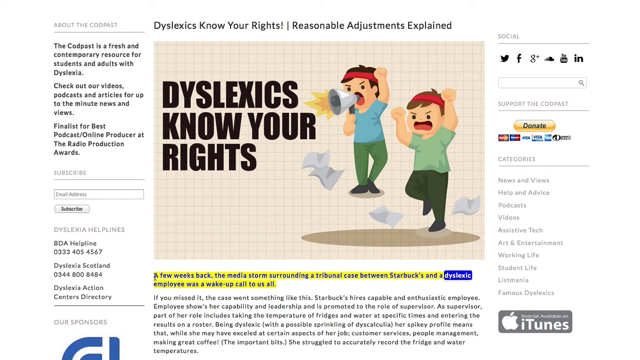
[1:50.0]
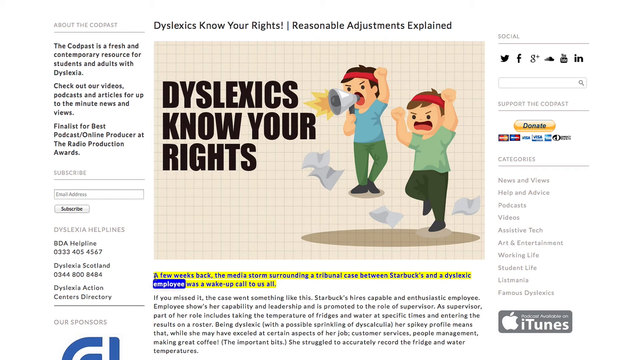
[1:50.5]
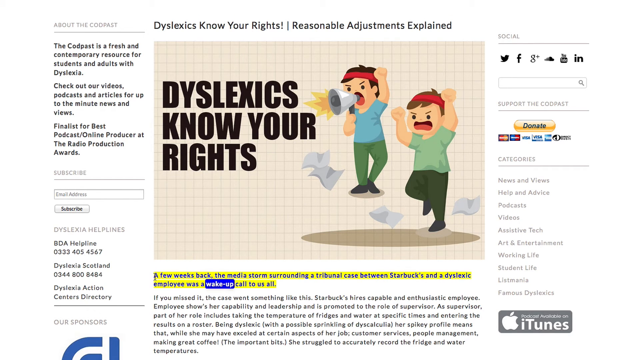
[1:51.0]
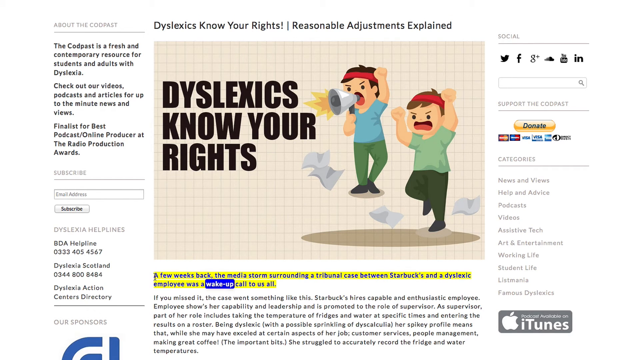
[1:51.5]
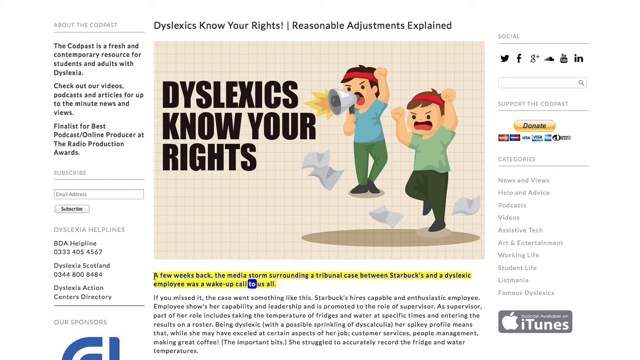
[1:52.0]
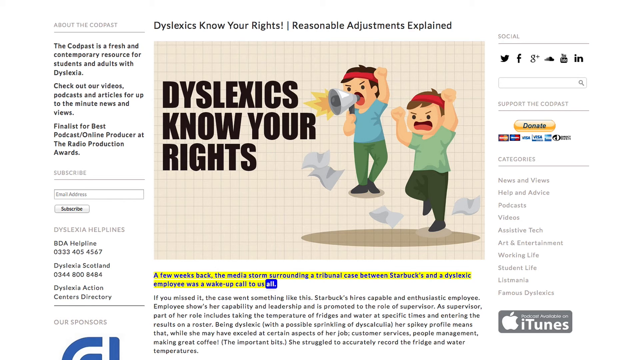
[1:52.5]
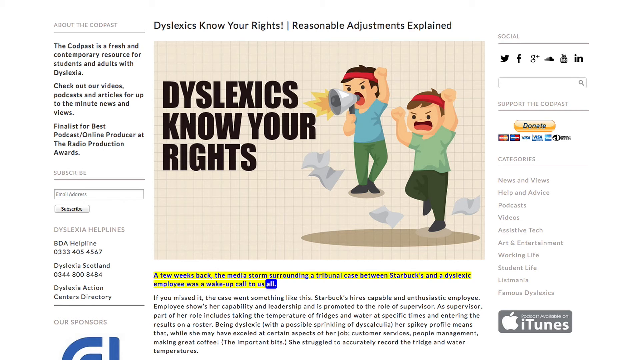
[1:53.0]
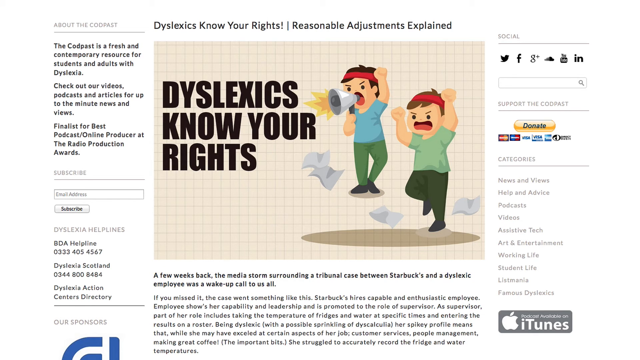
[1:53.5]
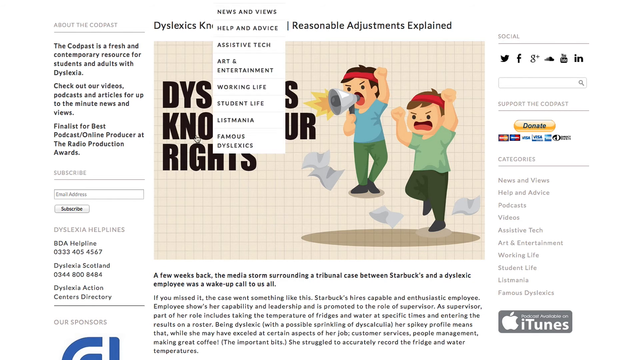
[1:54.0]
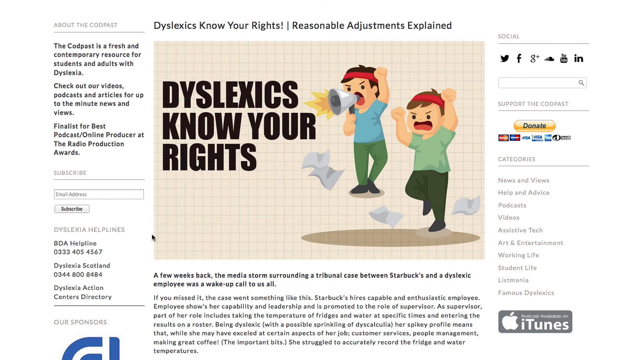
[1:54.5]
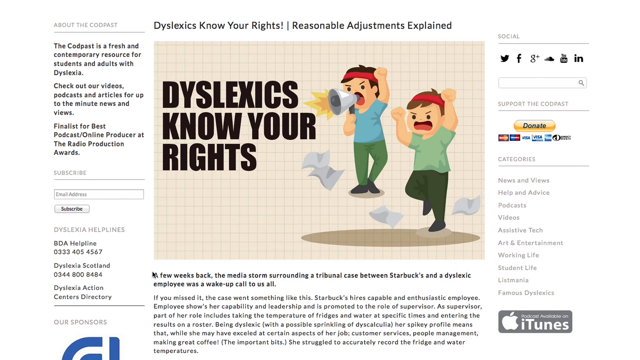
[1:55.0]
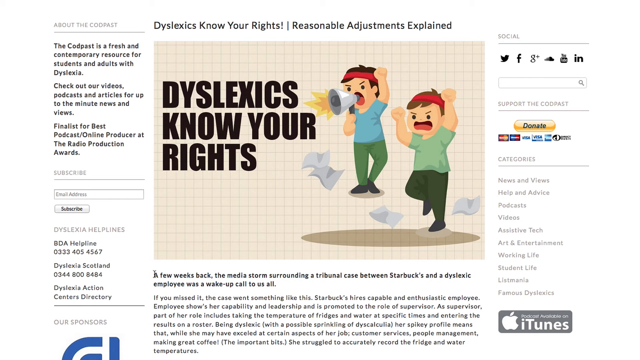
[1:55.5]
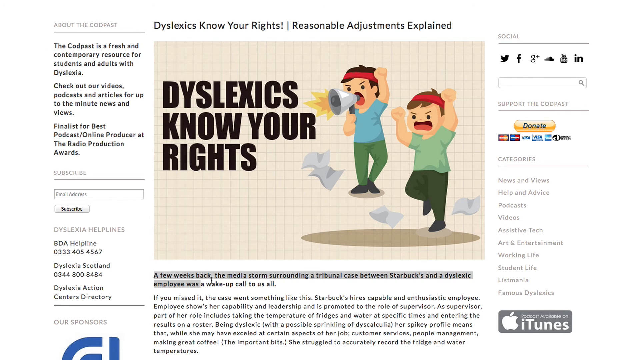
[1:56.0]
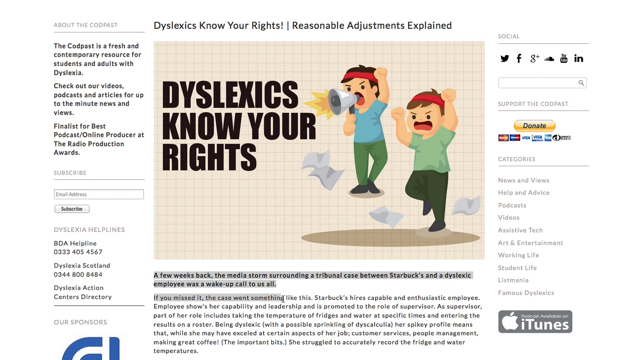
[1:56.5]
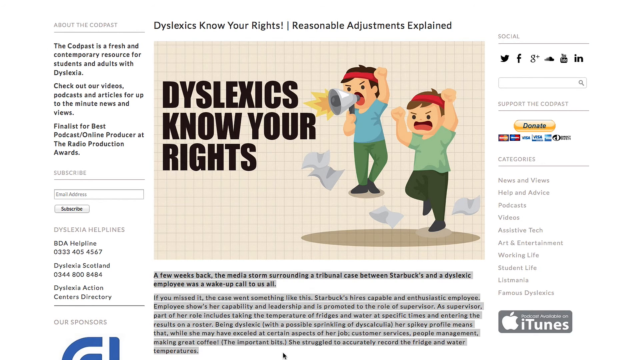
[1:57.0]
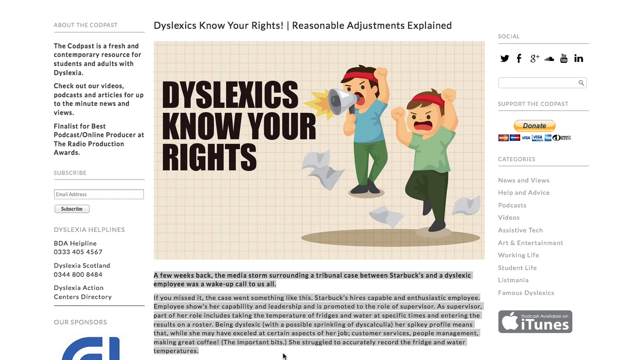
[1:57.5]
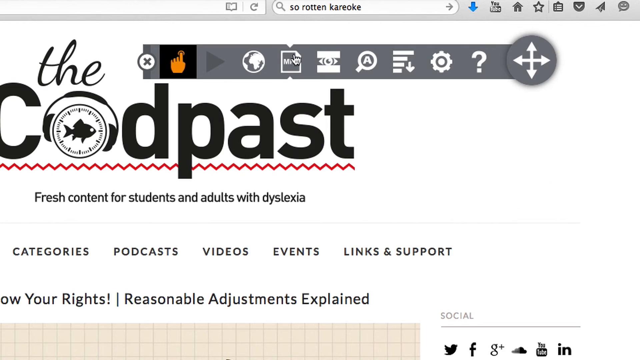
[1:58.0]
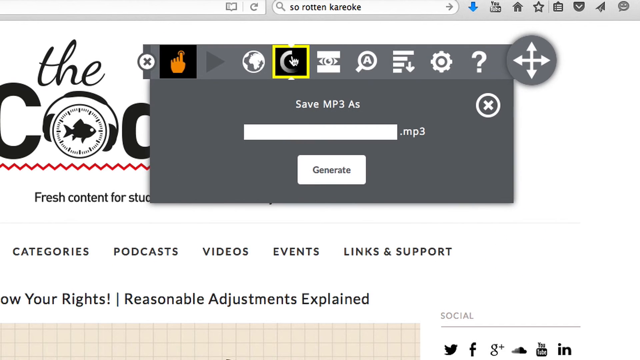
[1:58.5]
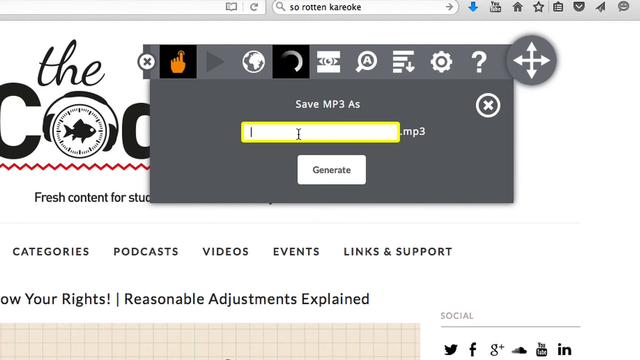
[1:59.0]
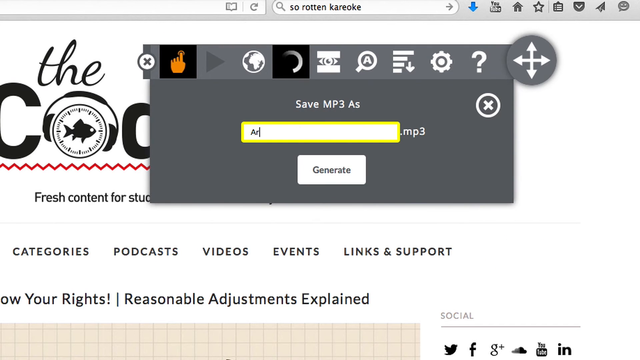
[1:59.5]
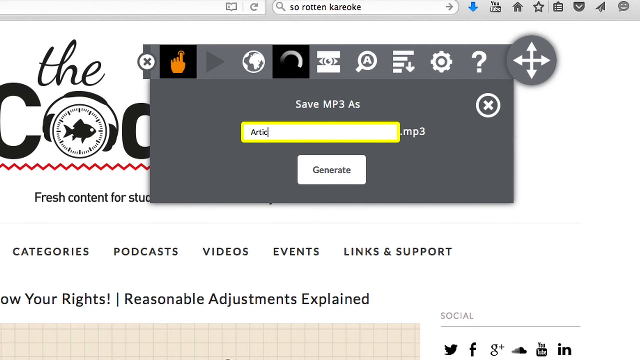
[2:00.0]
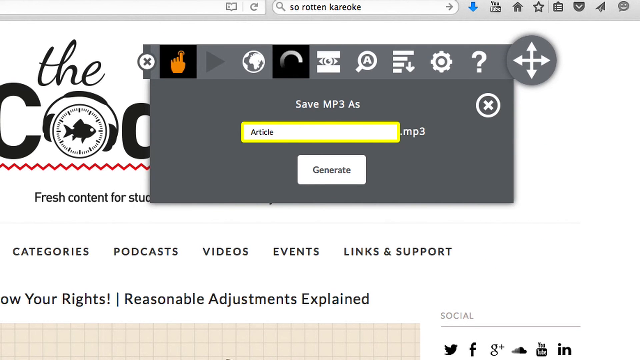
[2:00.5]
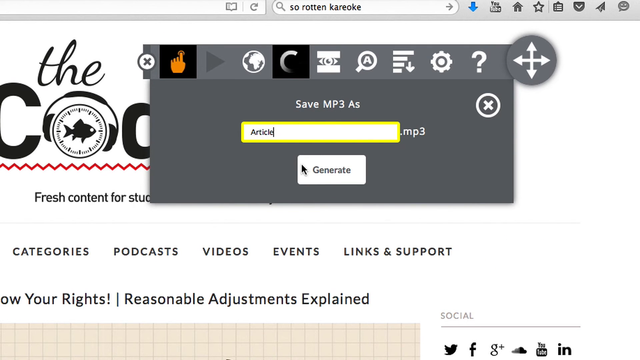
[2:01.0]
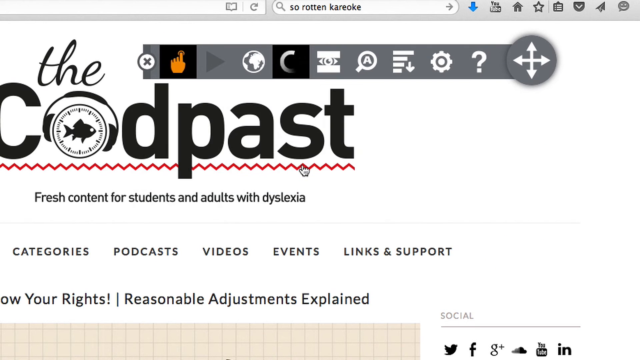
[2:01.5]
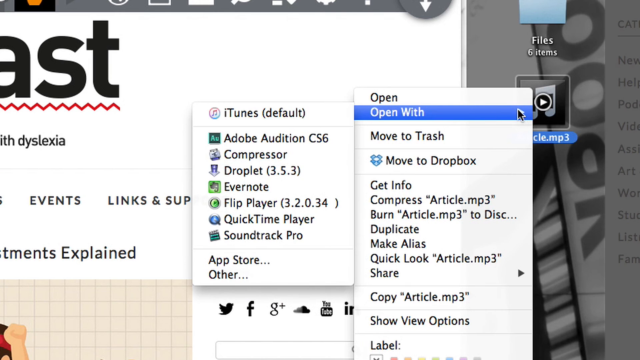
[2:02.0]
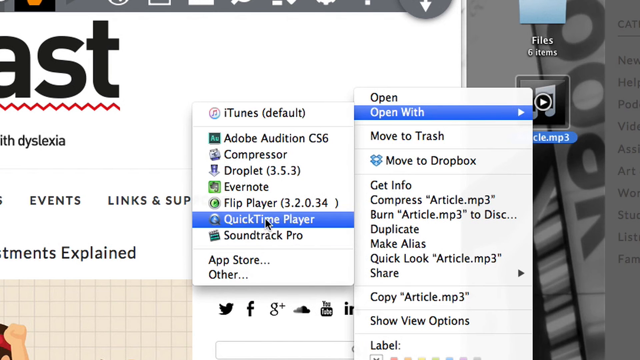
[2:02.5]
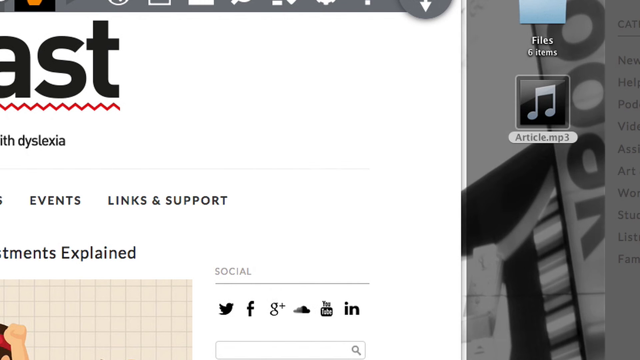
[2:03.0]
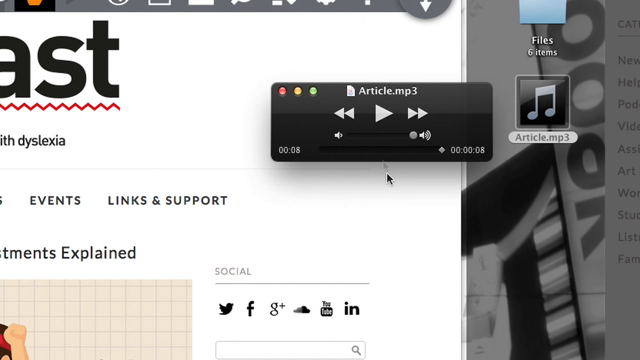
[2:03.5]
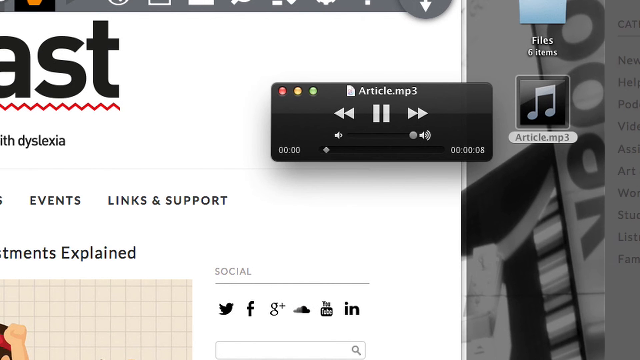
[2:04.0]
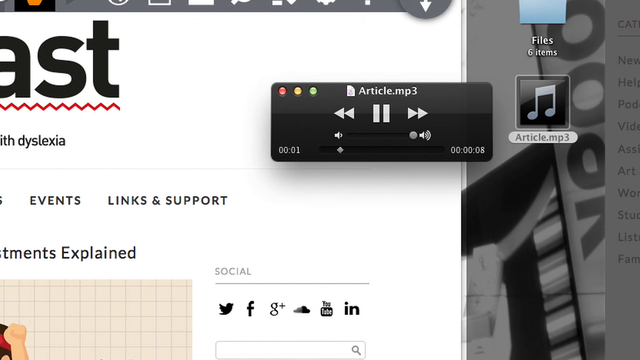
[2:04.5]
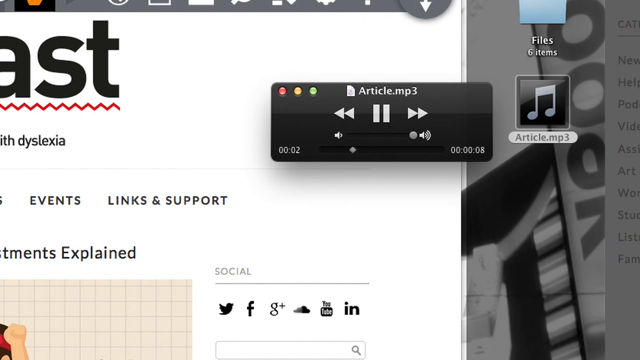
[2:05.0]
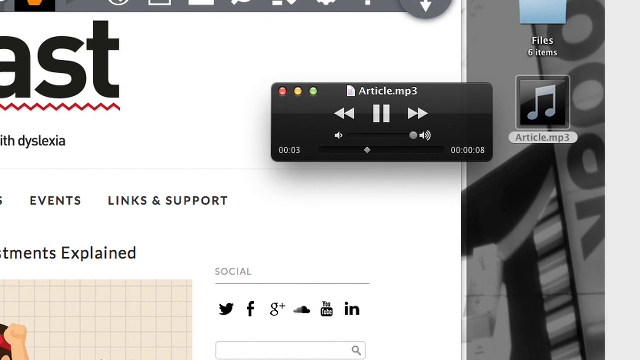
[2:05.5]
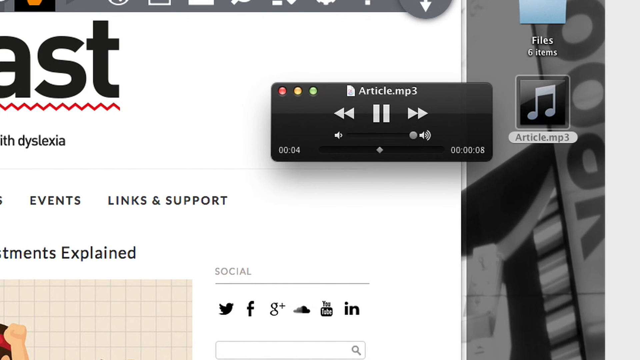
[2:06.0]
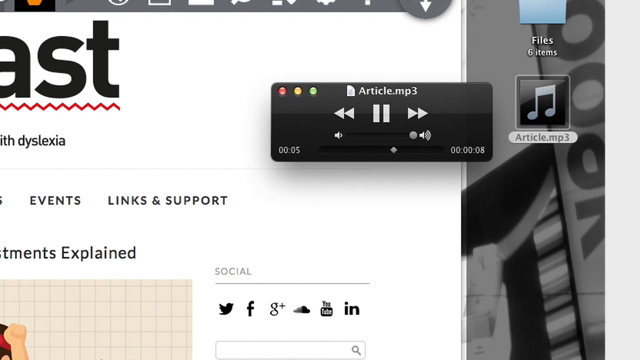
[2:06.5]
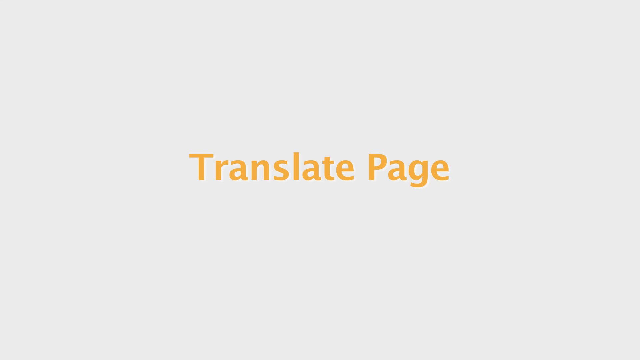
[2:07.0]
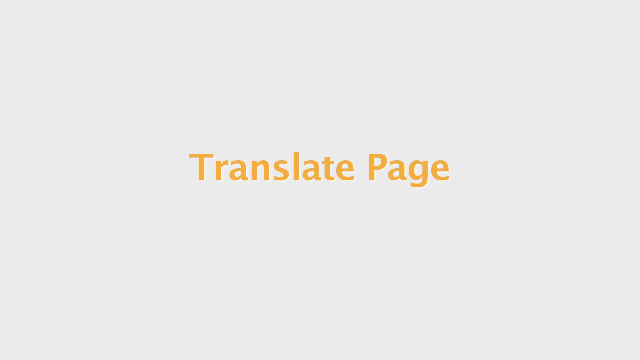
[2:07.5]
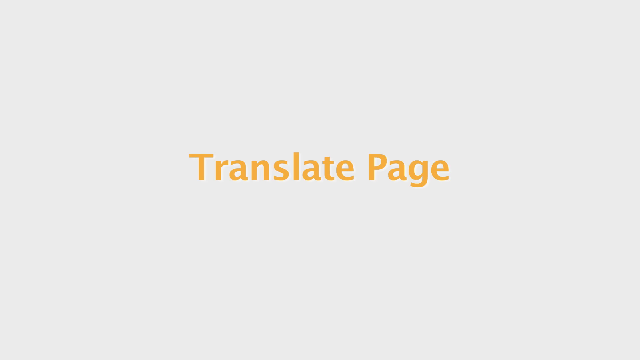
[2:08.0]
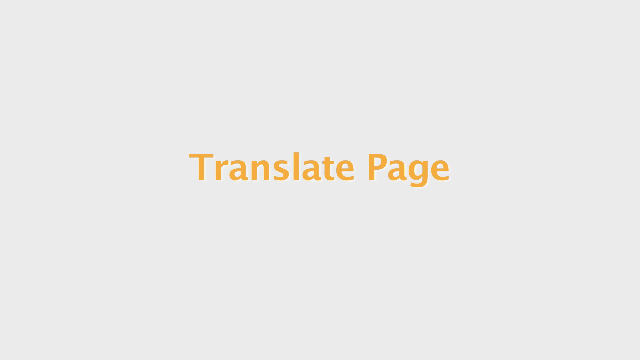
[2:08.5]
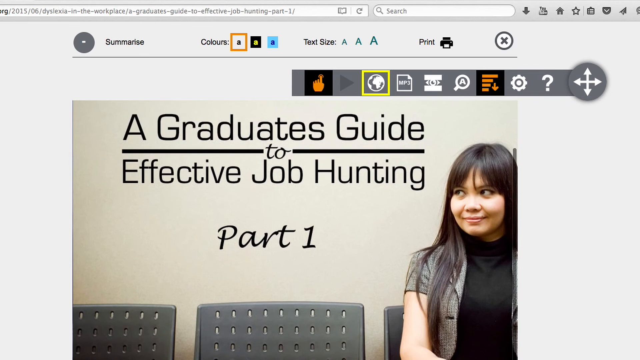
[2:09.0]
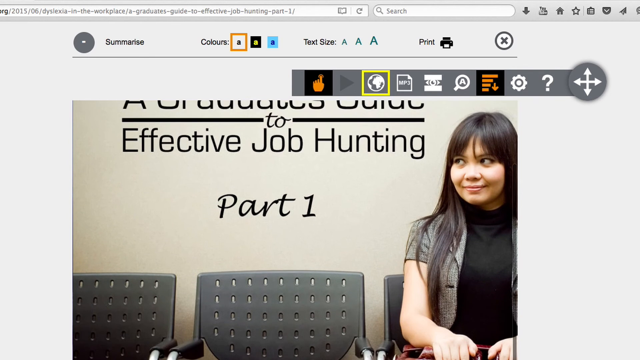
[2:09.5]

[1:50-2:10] Each word of the article is highlighted as it is spoken. The person then cancels it, highlights a large portion of the page's text, goes back to the toolbar at the top and presses on it, types in "article," right-clicks and saves it to their desktop. They double-click the article.mp3 file on their computer, which opens an audio player, and click the play button, showing that the highlighted words have been saved into a file on the computer. The video cuts to a page saying "translate page," while the cartoon image of the people jumping up in the air screaming is still shown.